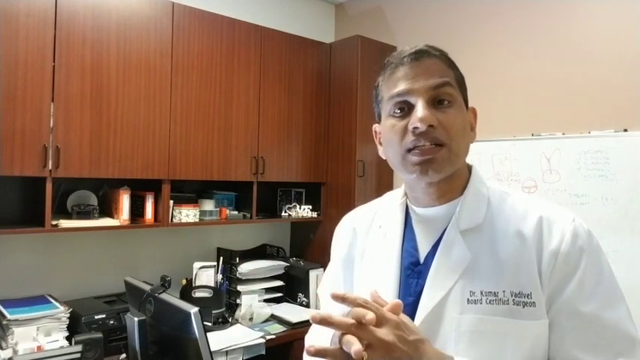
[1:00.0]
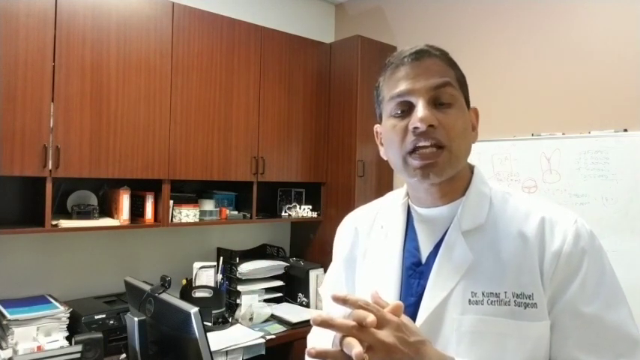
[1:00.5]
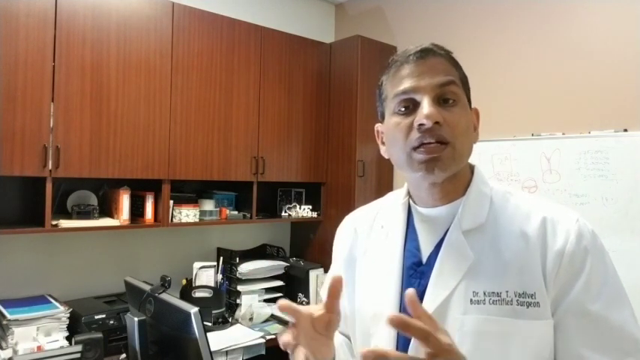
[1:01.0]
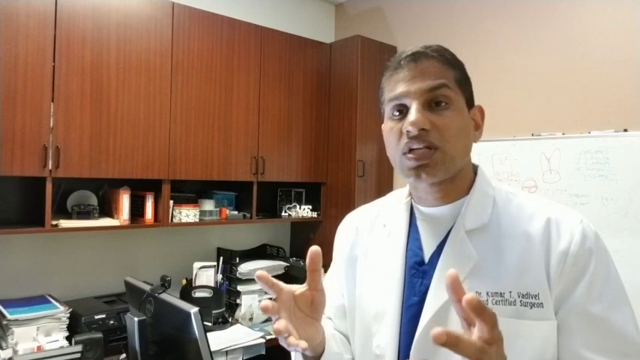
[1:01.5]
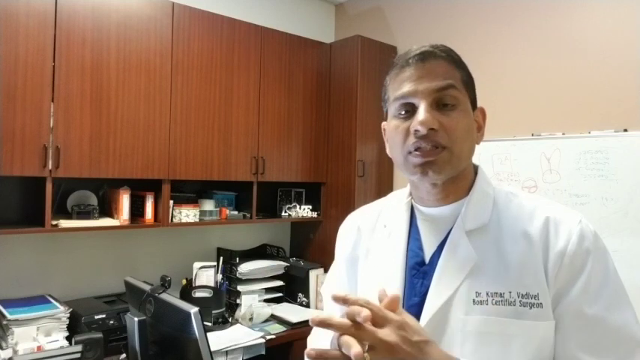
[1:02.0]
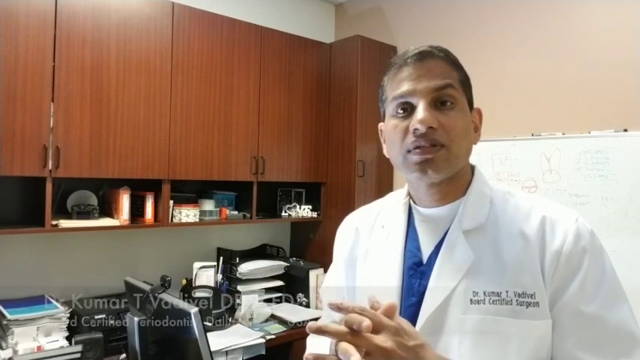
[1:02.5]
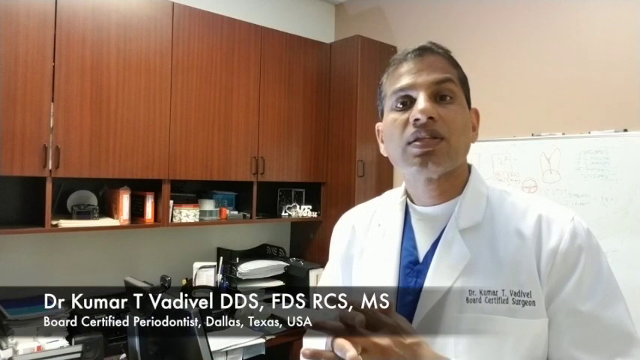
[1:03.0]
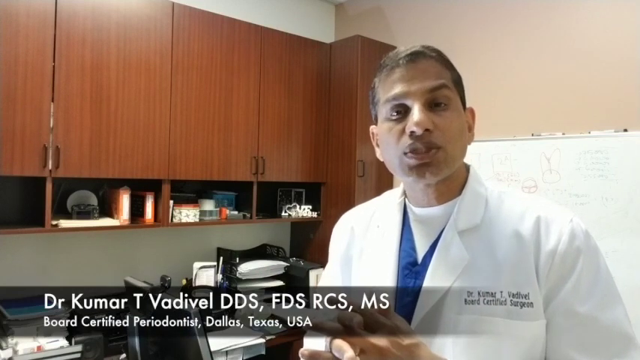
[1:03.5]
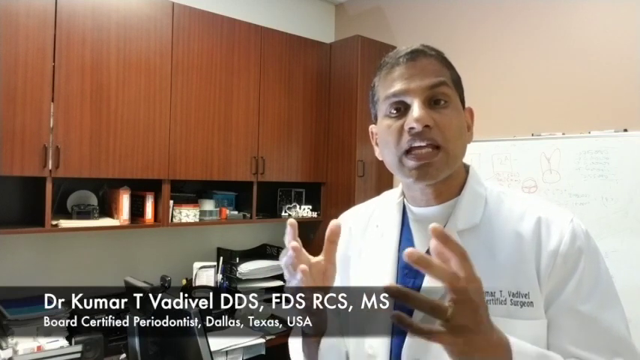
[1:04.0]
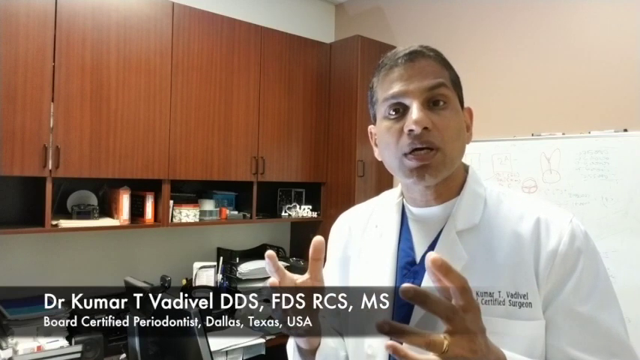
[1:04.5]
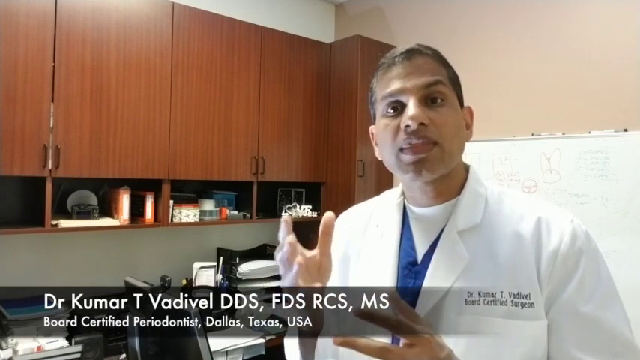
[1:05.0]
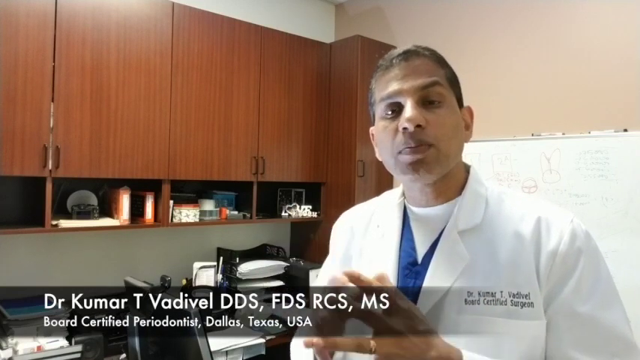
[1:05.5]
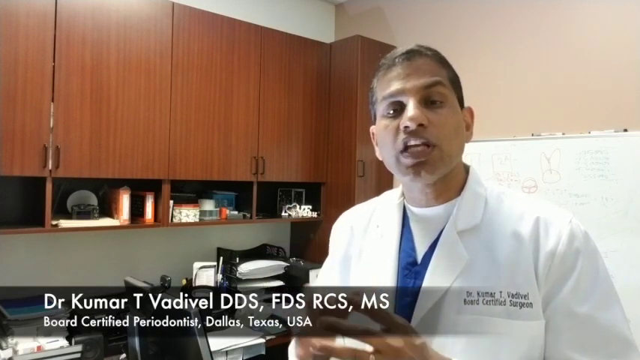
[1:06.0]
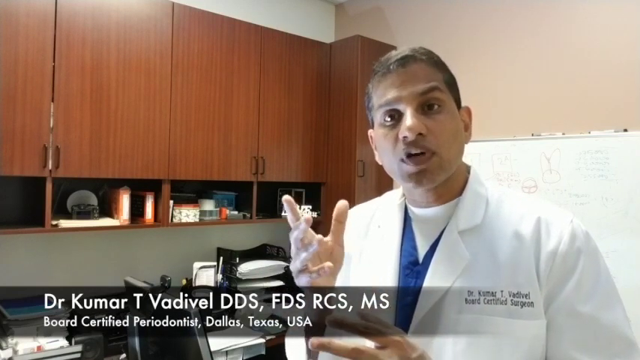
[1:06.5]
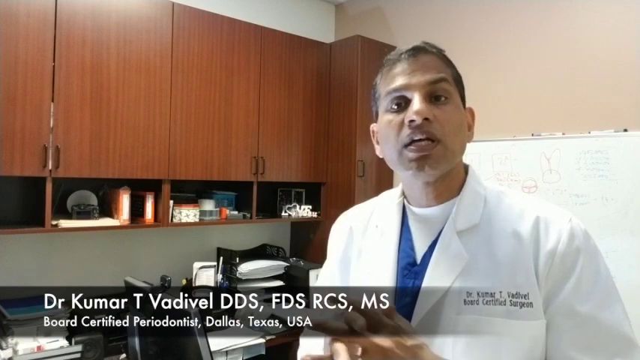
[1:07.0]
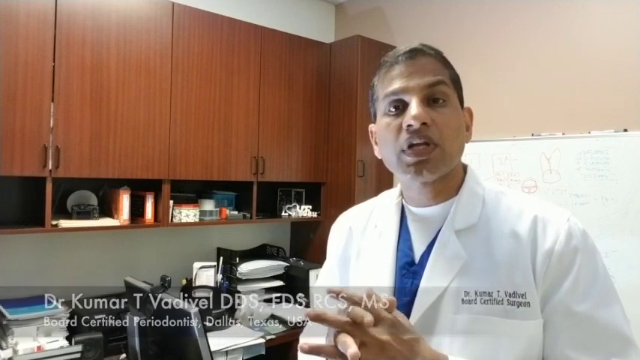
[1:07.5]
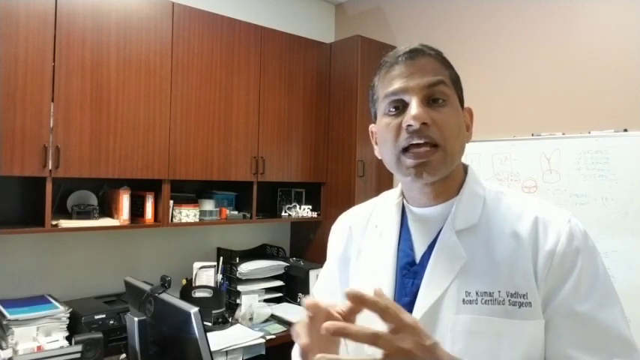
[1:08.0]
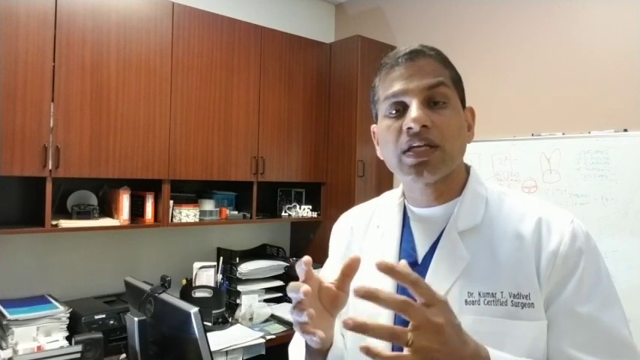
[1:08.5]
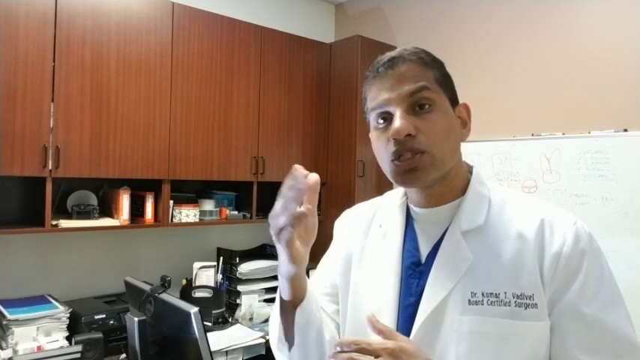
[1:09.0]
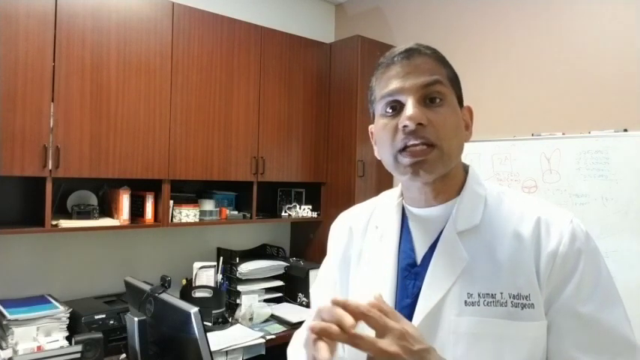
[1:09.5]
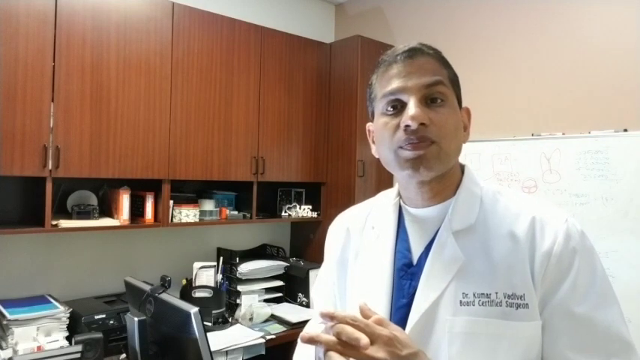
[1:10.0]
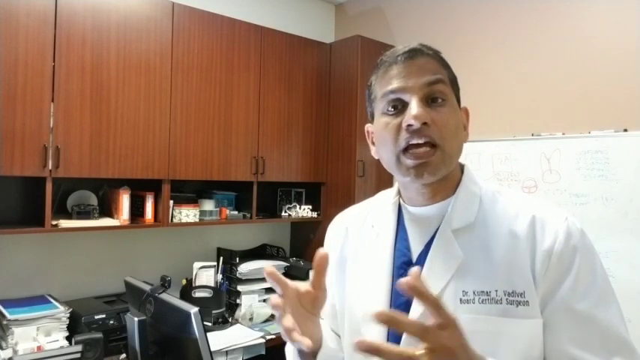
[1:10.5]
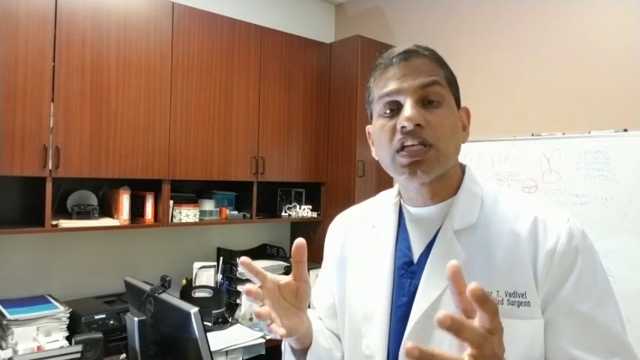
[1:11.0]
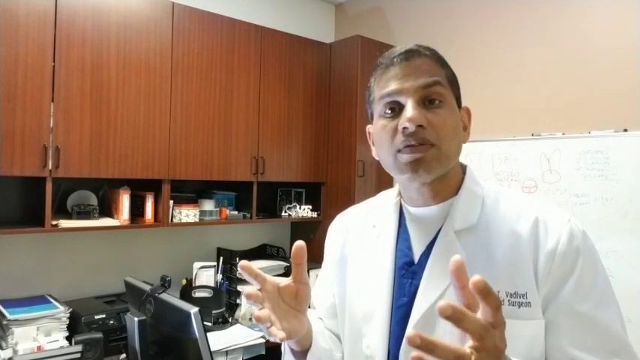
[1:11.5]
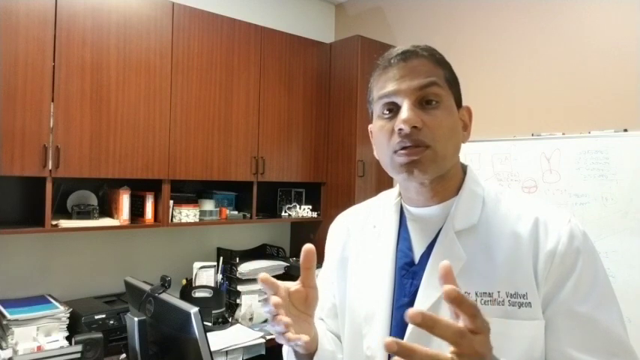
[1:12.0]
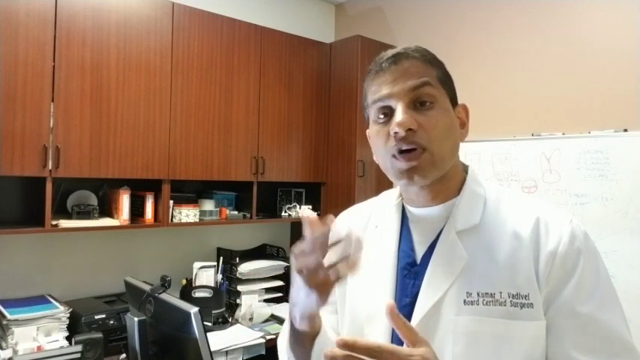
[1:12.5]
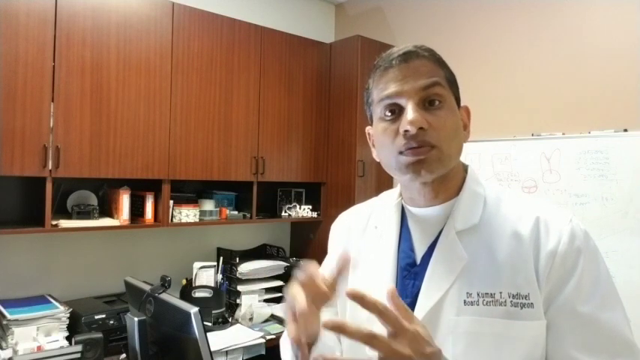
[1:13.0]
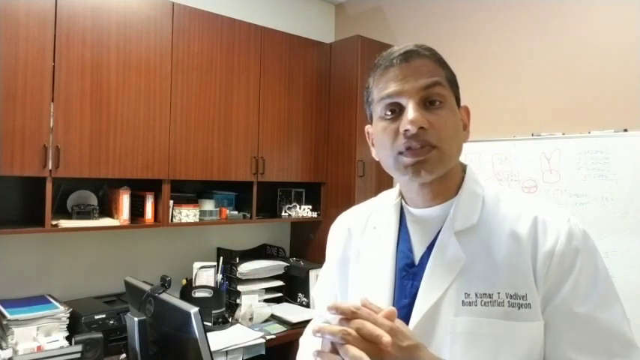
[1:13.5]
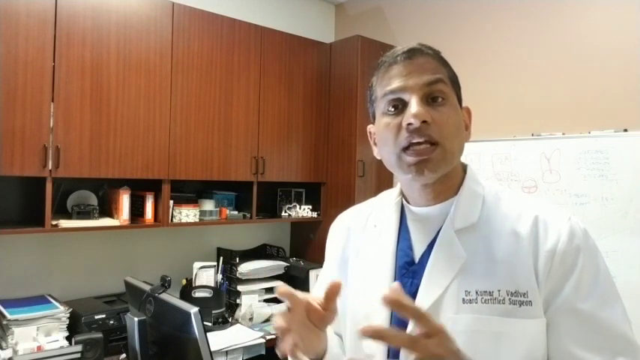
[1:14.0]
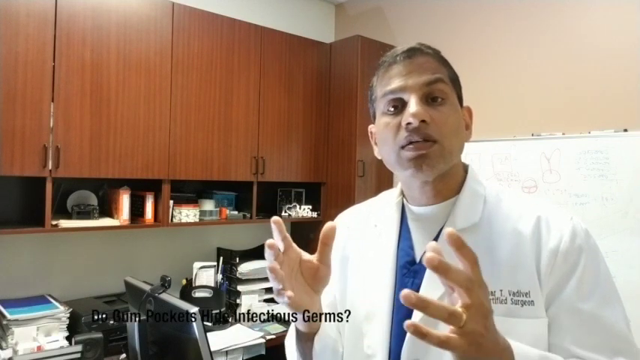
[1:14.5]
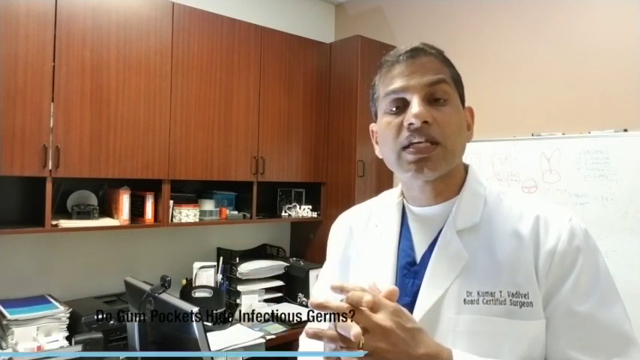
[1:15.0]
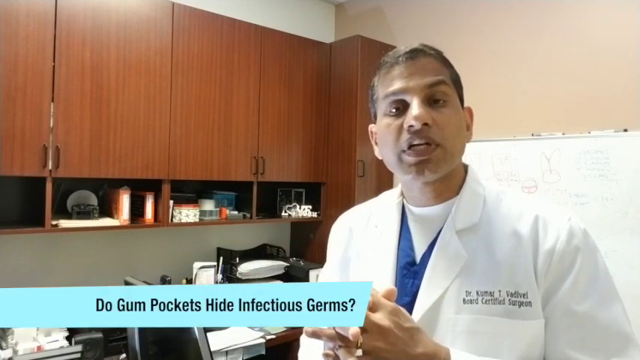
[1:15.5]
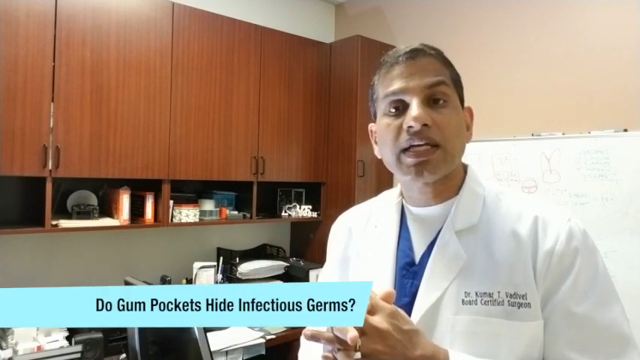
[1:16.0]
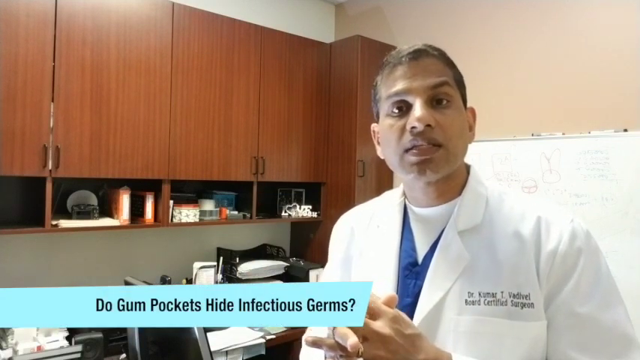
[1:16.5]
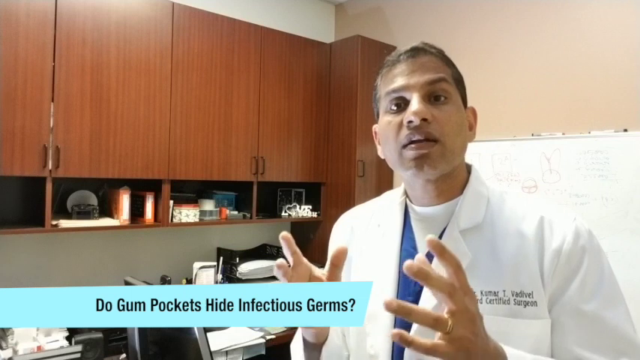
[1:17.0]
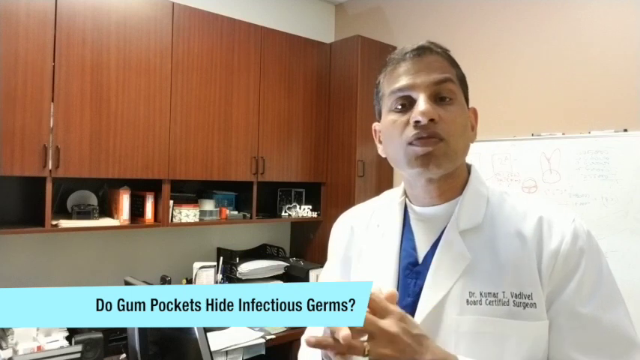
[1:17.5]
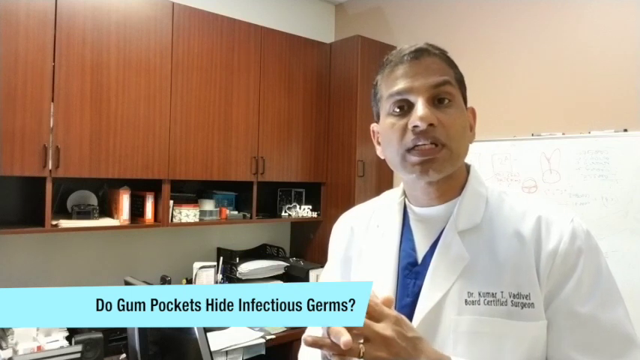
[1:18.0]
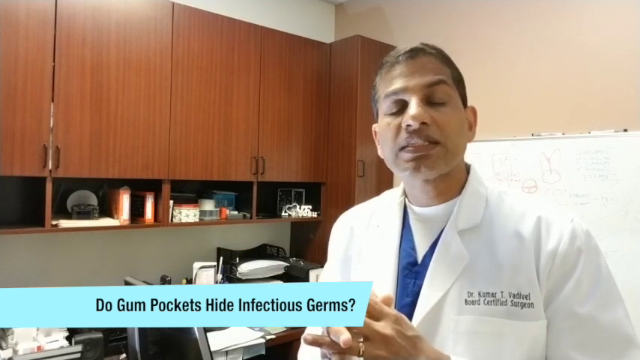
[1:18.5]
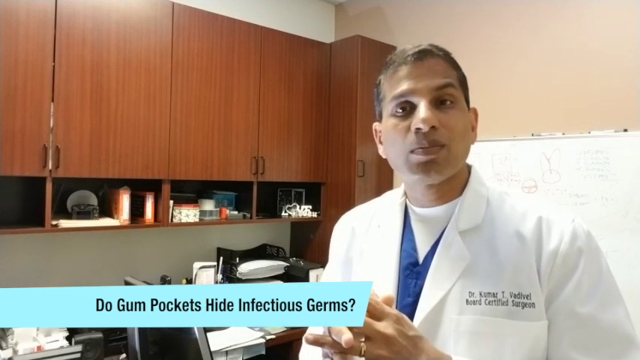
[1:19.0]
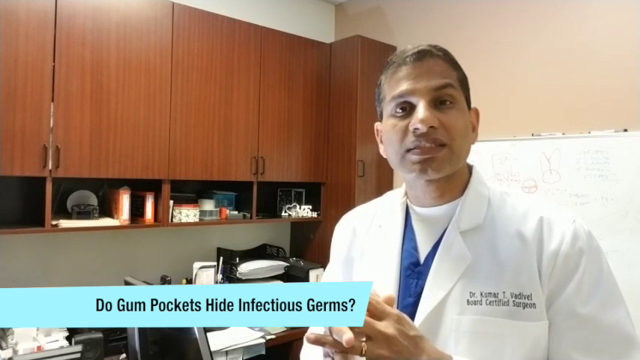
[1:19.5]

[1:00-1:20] A man in a white lab coat is standing in an office. The lab coat has his name embroidered on it: "Dr. Kumar T. Vadivel, board certified surgeon". Underneath it he wears blue scrubs with a white t-shirt under them. In the office there are brown veneer wood wall cabinets, a computer monitor with a Dell logo on the back, and various file in and out trays with lots of white paper in them. As Dr. Kumar speaks, he clasps and unclasps his hands and occasionally gestures with his right hand by raising it slightly. Text appears on the screen identifying him as "Dr. Kumar T. Vadivel, DDS, FDS, RCS, MS, Board Certified Periodontist, Dallas, Texas, USA". Then text appears at the bottom left of the screen reading "Do gum pockets hide infectious germs?", and a light blue background appears behind it to highlight the text.